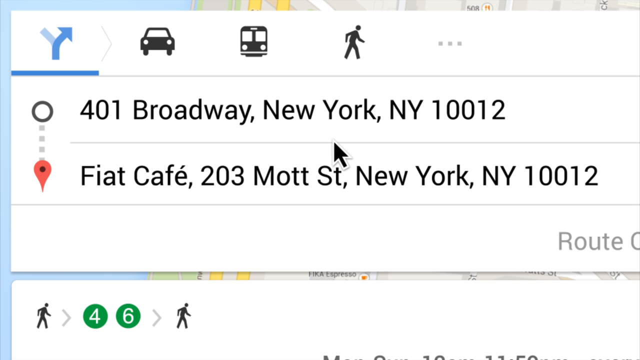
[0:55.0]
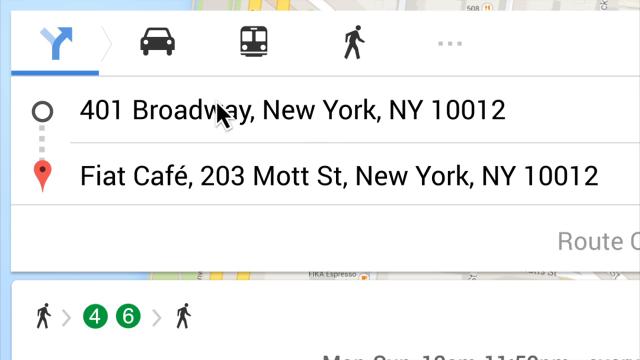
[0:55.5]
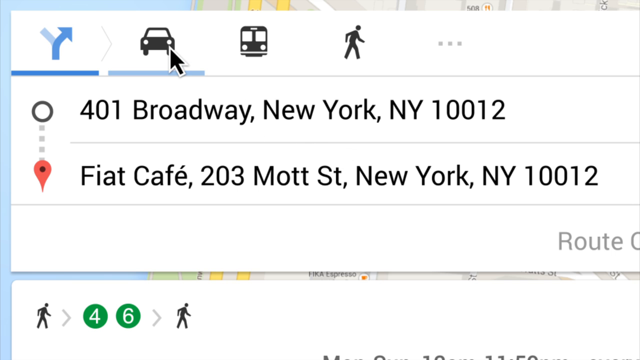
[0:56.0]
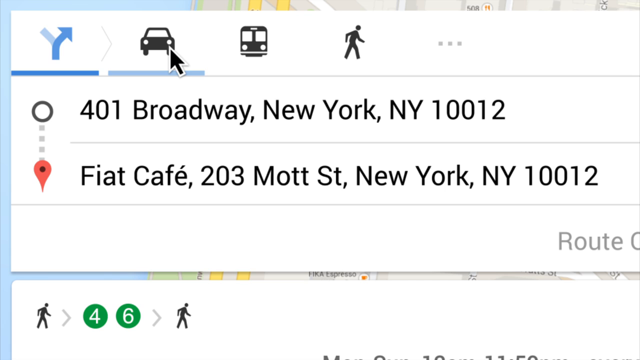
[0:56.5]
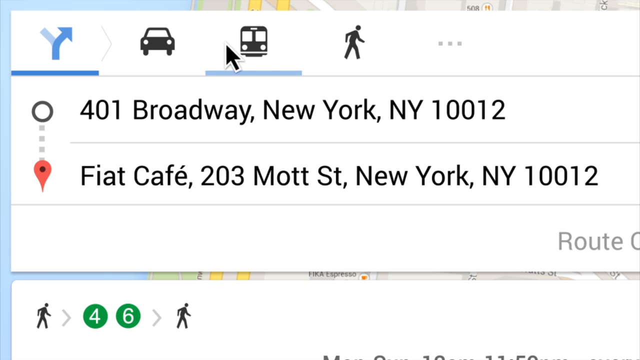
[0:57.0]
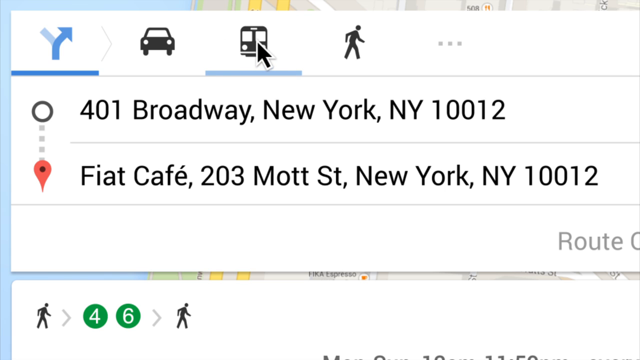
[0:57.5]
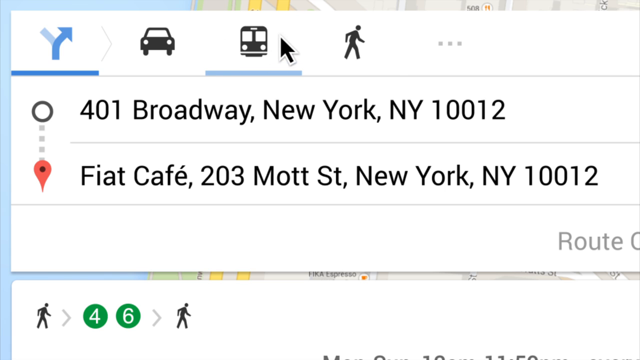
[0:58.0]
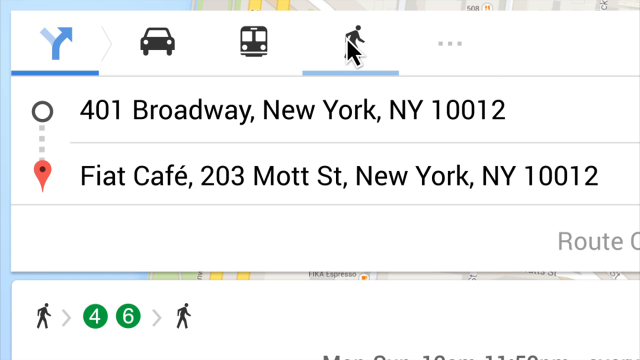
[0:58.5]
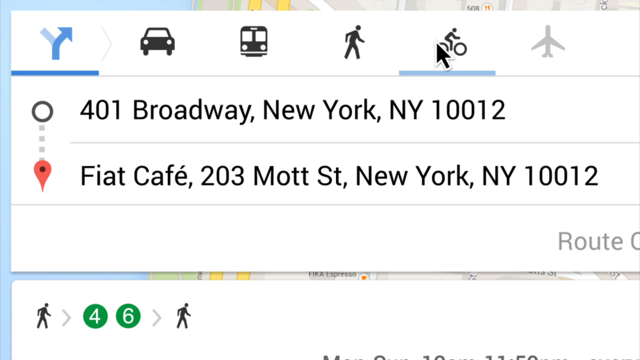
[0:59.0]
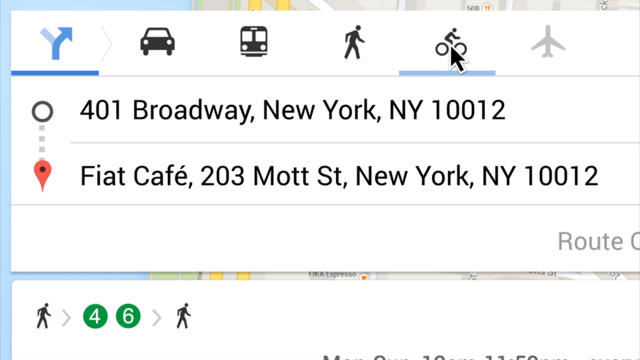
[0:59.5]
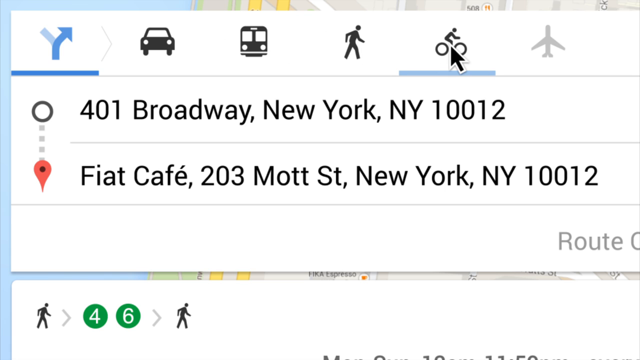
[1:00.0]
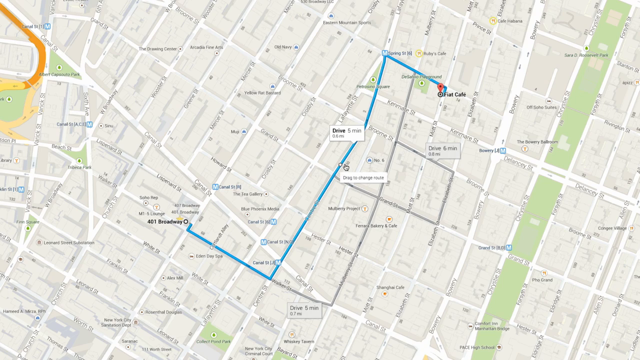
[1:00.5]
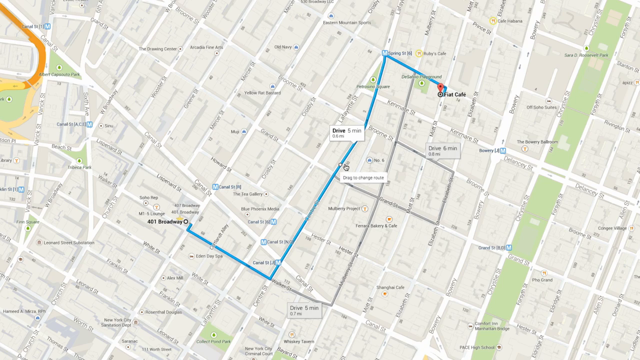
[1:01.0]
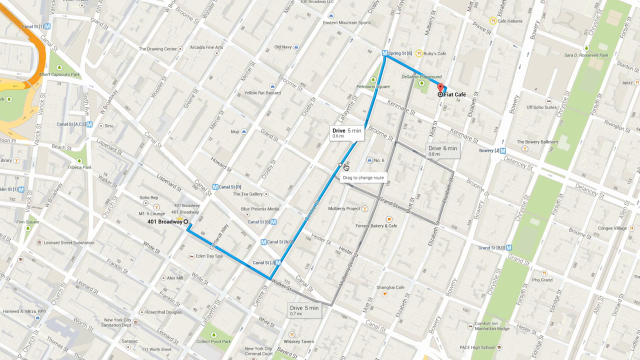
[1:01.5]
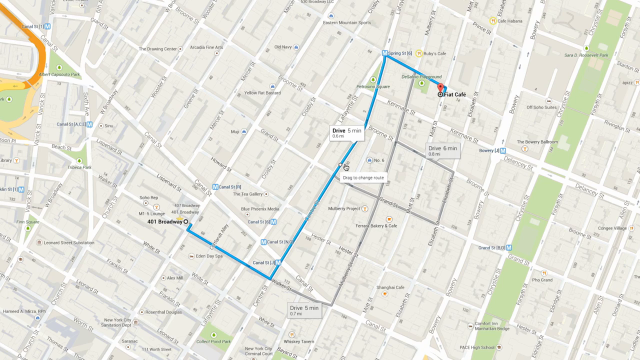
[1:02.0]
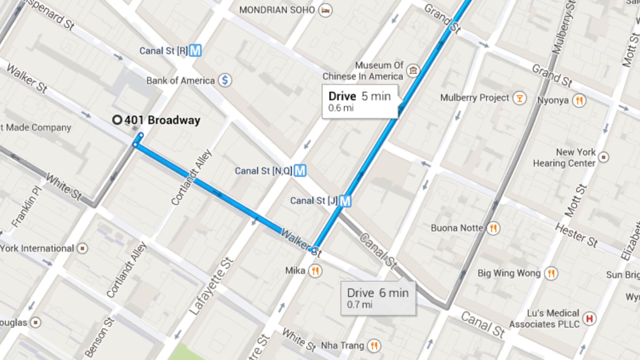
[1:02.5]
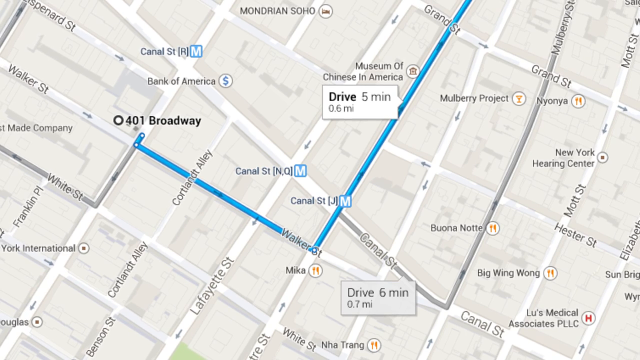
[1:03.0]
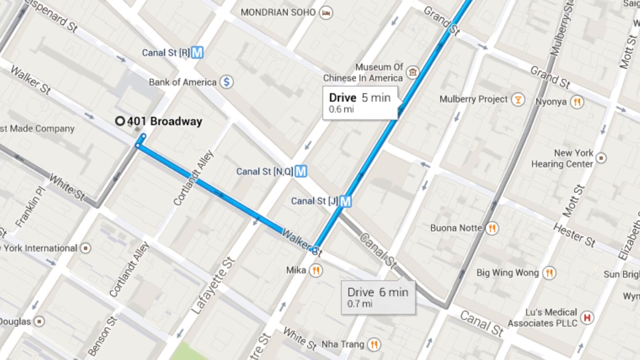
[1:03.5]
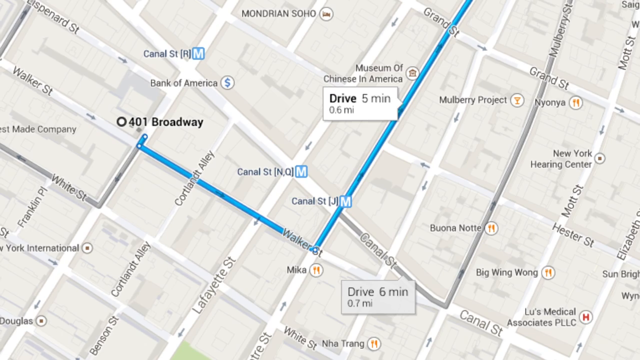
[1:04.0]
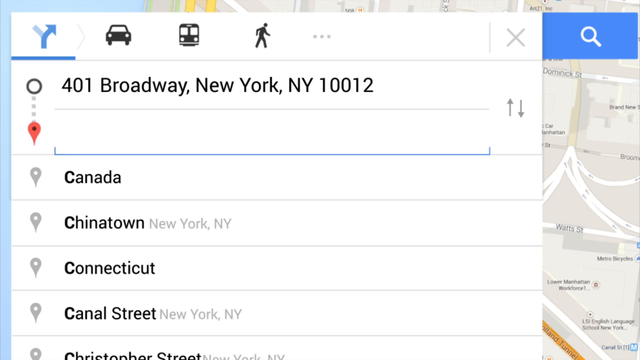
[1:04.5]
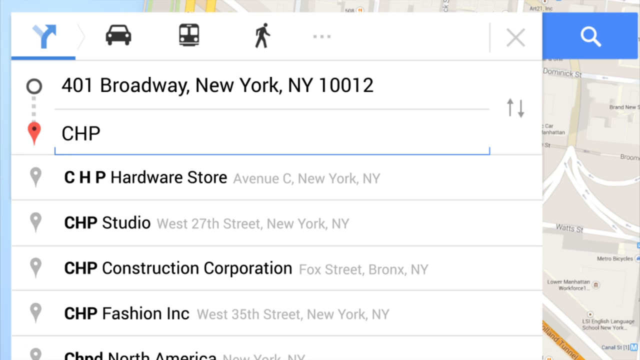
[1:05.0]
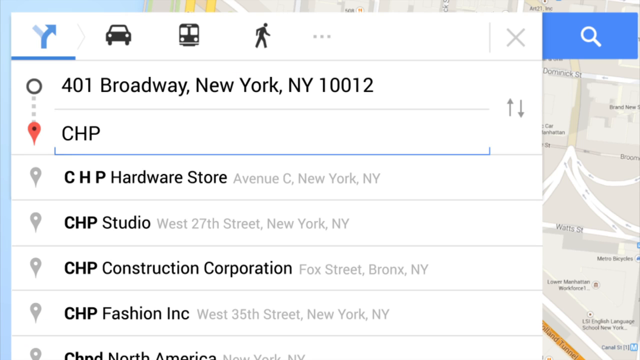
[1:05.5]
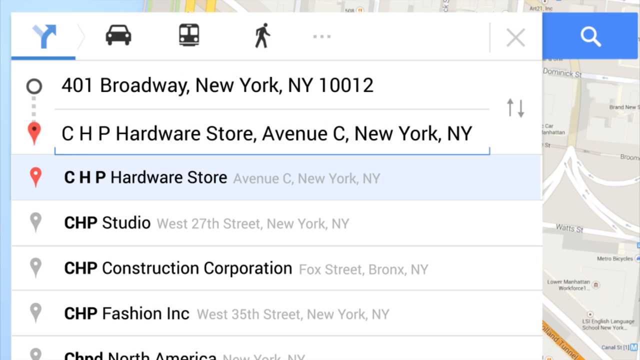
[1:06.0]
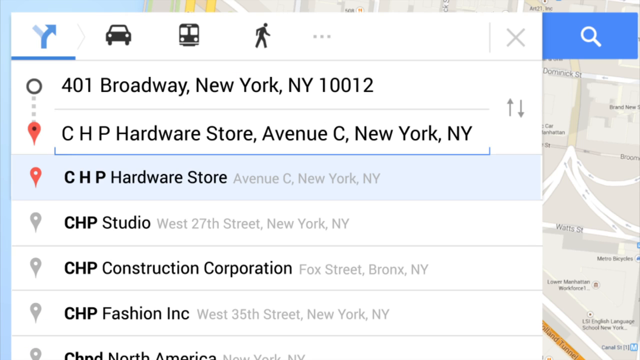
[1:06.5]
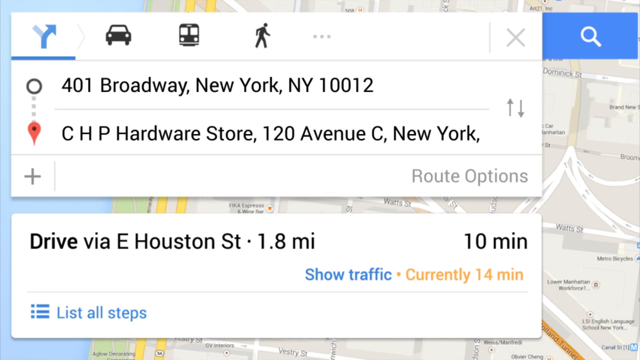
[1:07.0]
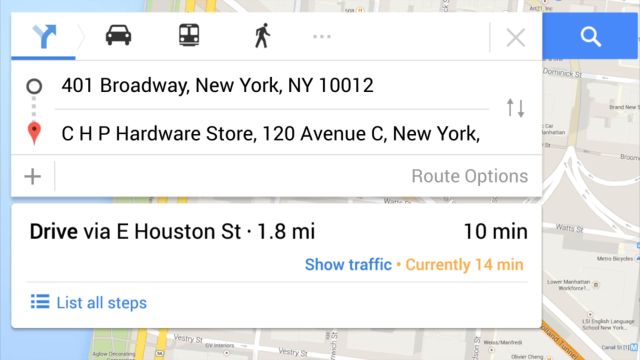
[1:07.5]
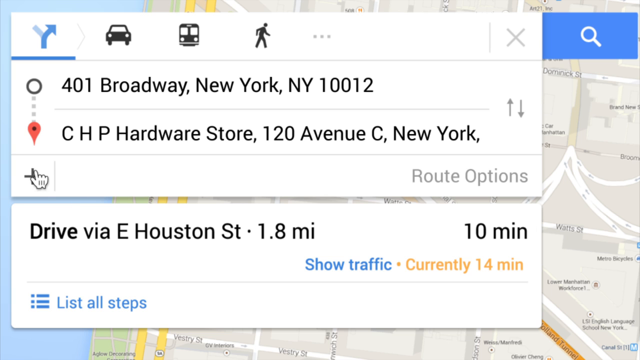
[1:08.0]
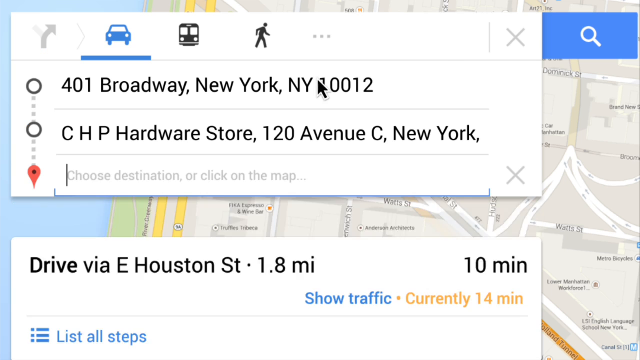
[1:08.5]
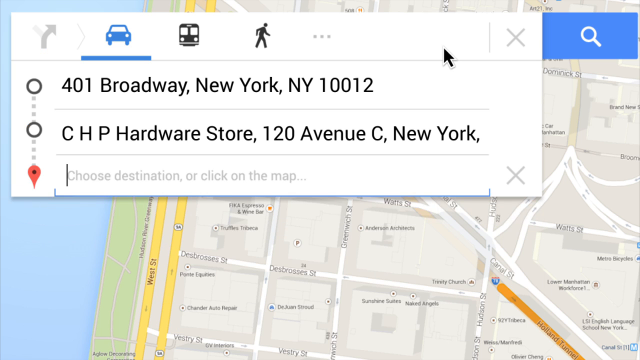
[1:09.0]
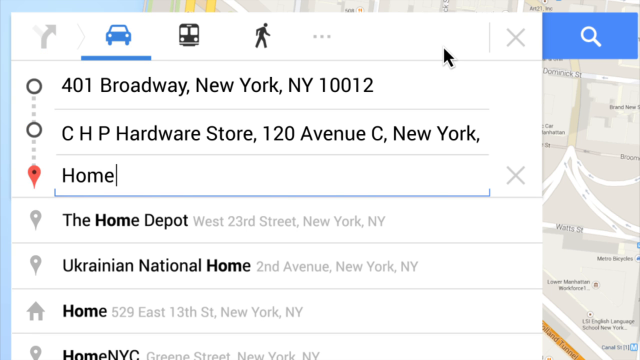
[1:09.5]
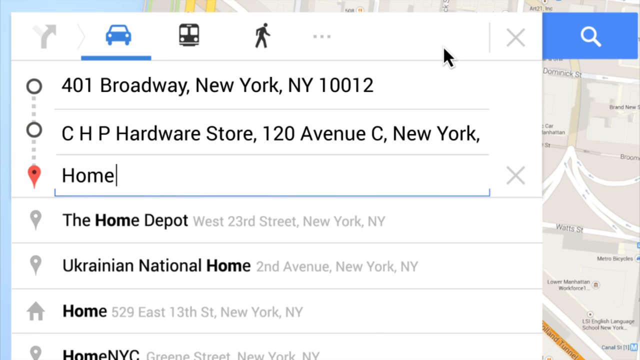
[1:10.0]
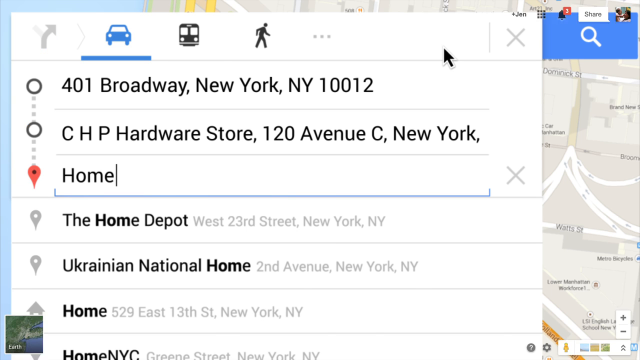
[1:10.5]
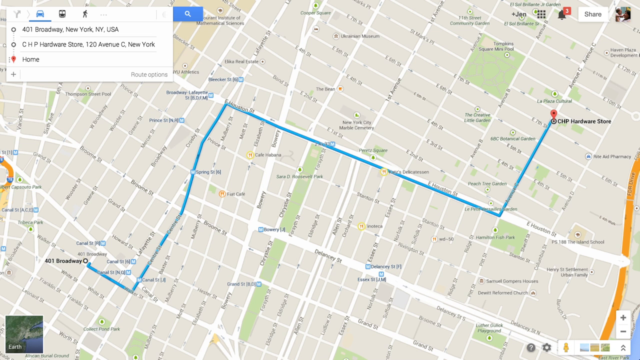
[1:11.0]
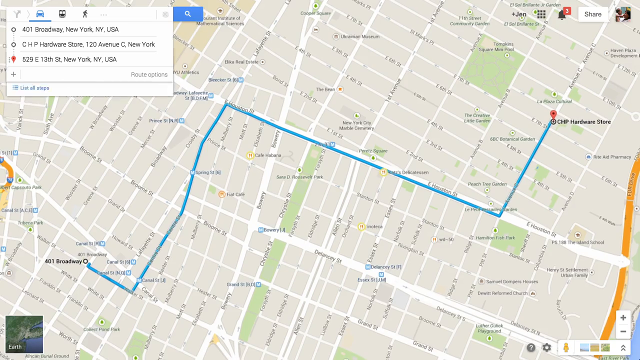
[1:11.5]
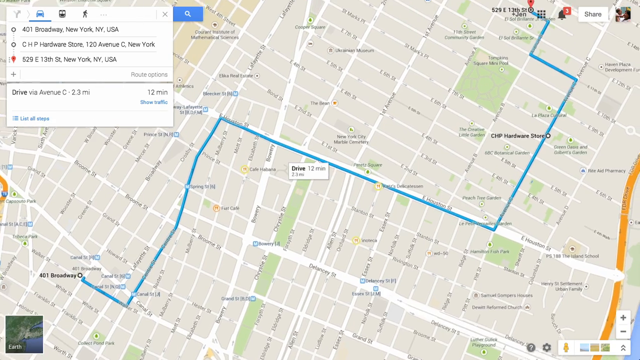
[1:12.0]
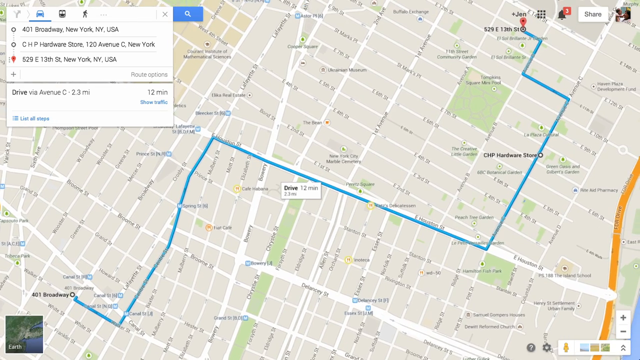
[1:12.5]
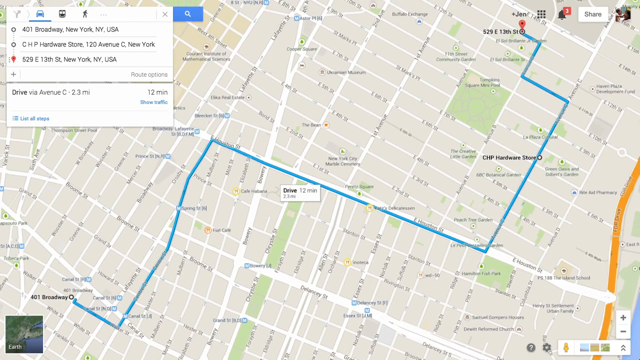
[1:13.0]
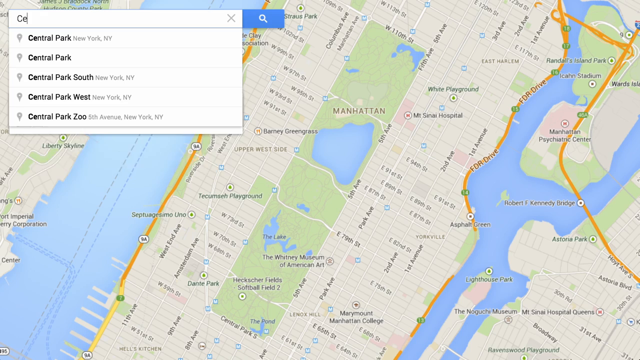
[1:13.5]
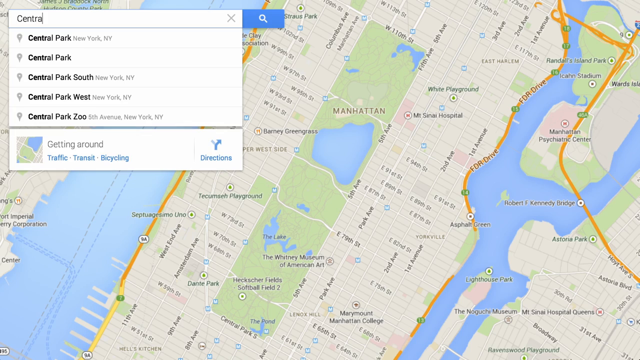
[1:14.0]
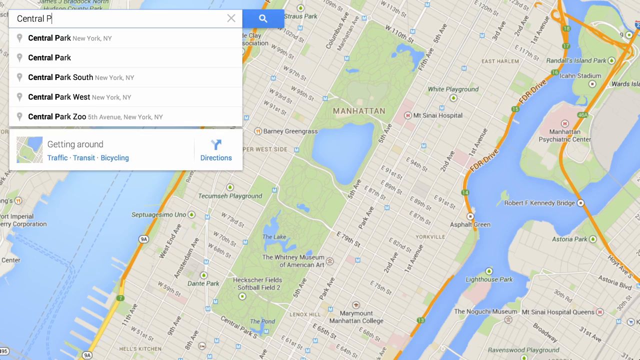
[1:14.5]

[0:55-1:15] On Google Maps, the person goes through the car, walk and bicycle options while looking for directions from 401 Broadway, New York, New York, to Fiat Cafe on Mott Street, New York, New York, comparing walking and biking options, and the map is shown with a blue line. The person then looks for directions to CHP Hardware Store, 120 Avenue C, New York, and then to home, which is possibly where they live. In an aerial shot of New York, they click through the car, trolley or bus, walking and bike options, apparently looking at the different times, especially to the CHP Hardware Store. The driving route goes via East Houston Street.